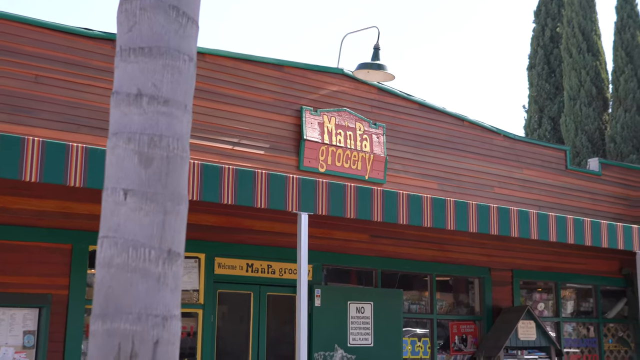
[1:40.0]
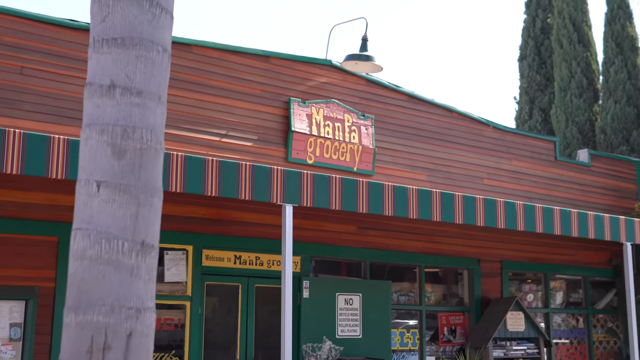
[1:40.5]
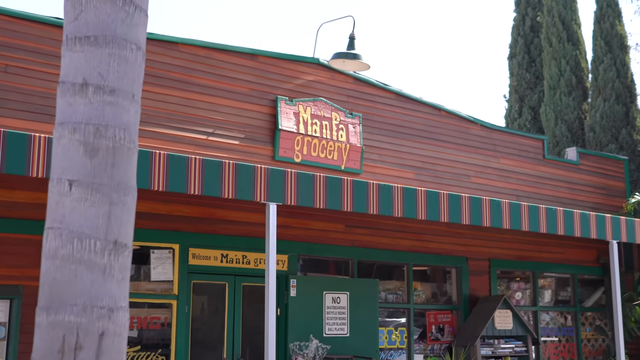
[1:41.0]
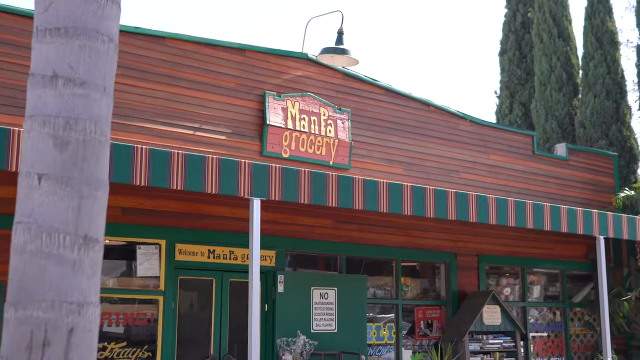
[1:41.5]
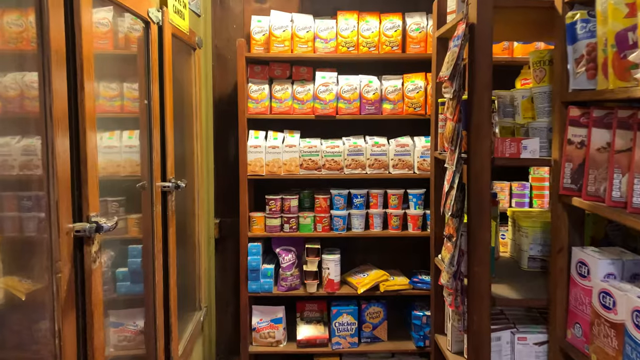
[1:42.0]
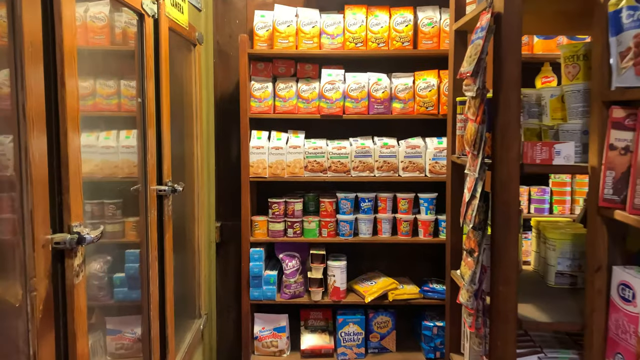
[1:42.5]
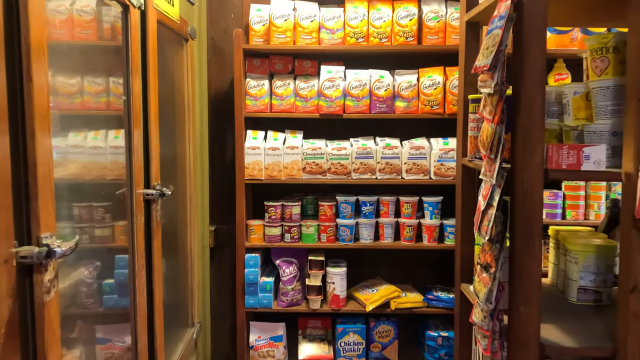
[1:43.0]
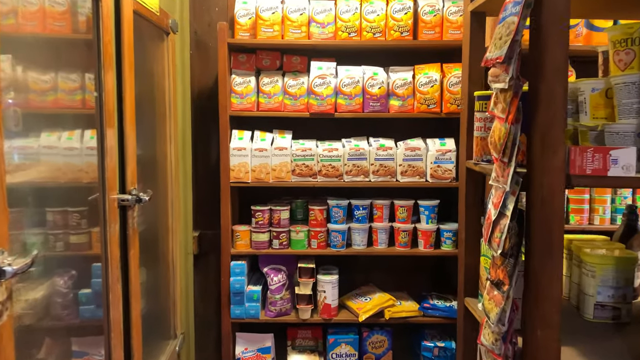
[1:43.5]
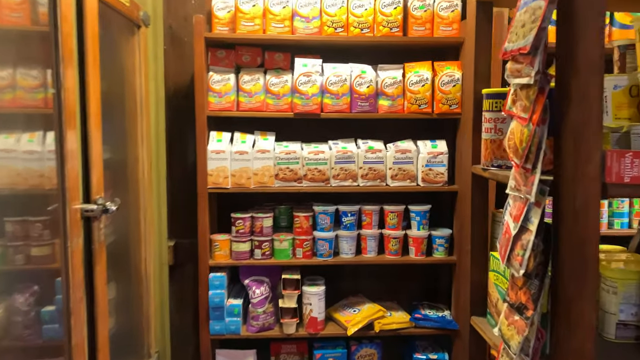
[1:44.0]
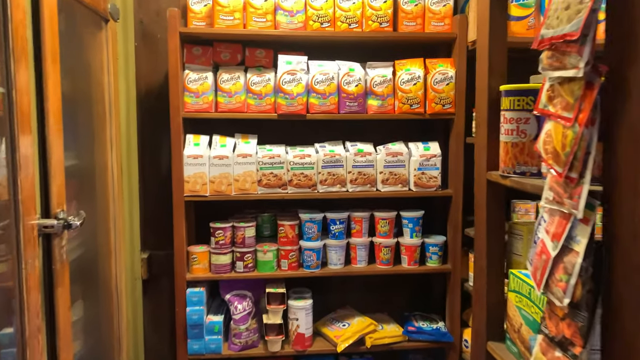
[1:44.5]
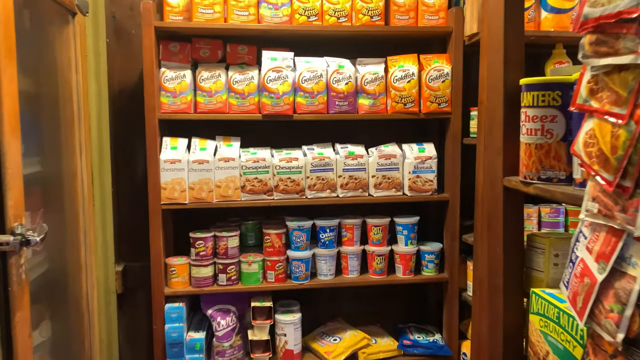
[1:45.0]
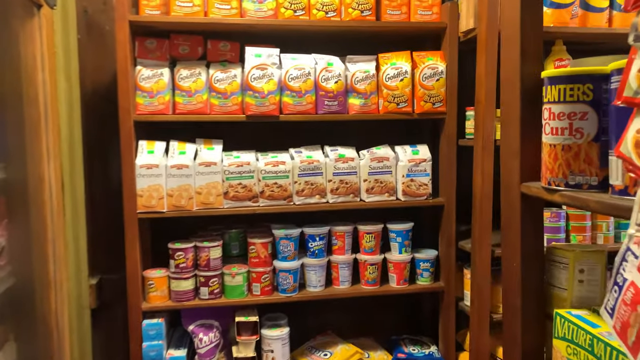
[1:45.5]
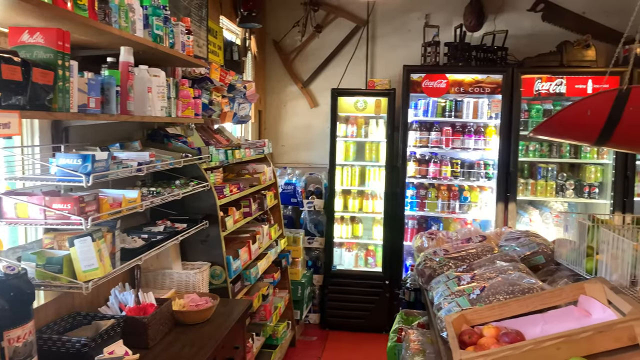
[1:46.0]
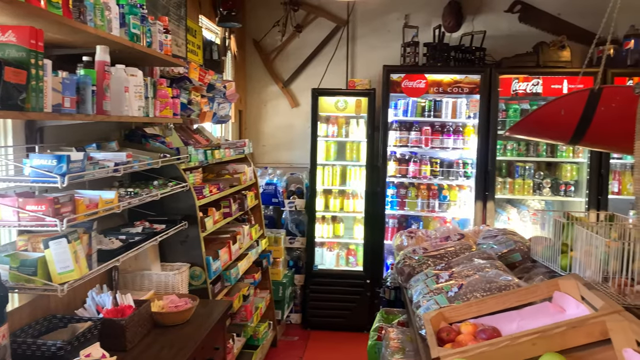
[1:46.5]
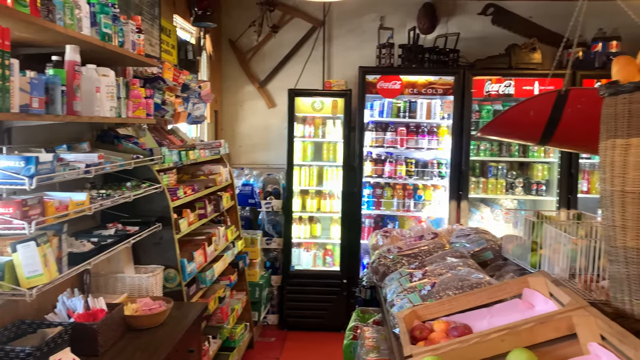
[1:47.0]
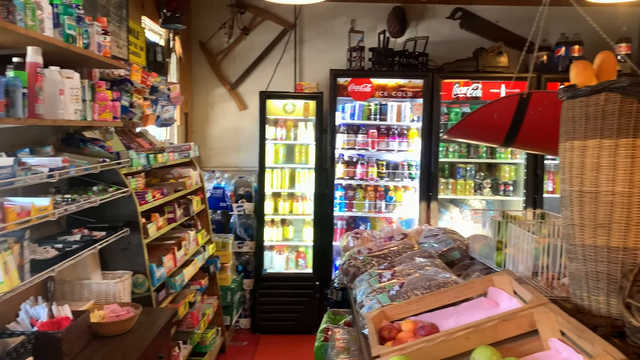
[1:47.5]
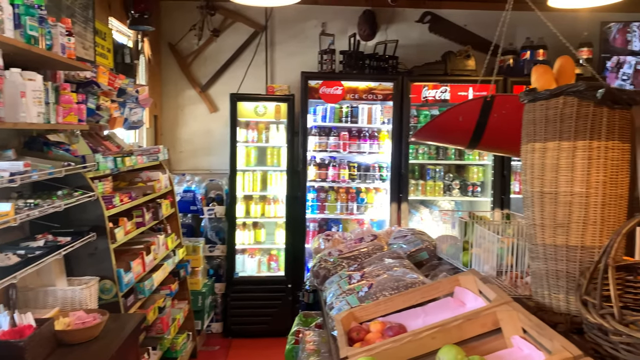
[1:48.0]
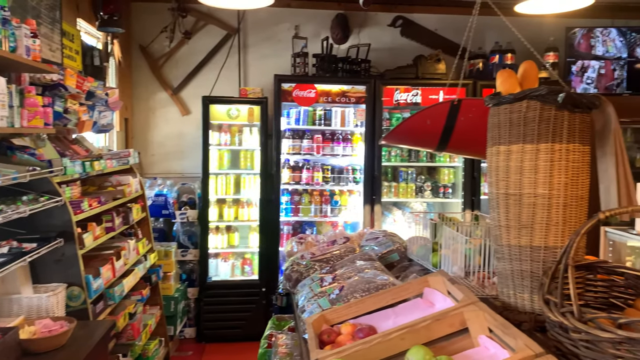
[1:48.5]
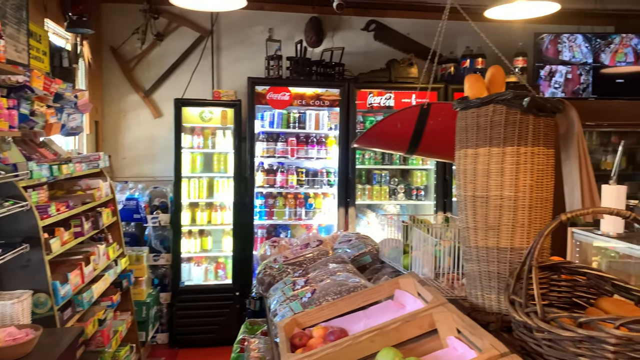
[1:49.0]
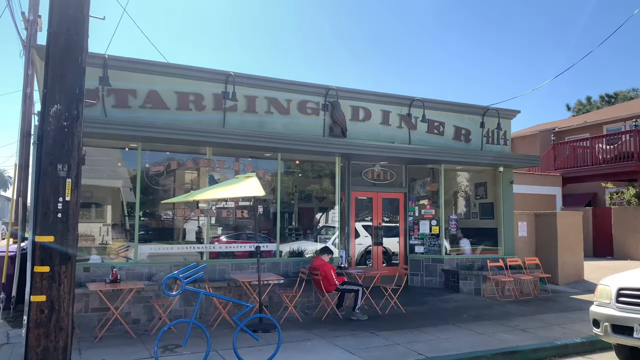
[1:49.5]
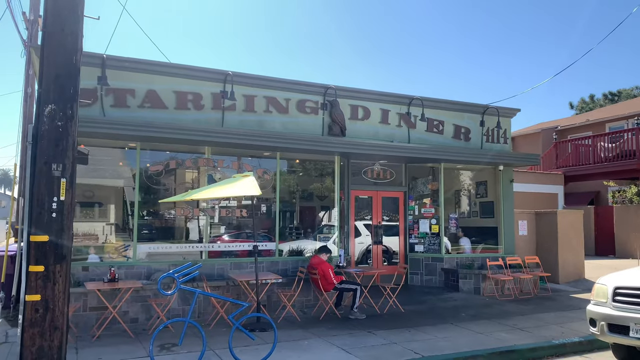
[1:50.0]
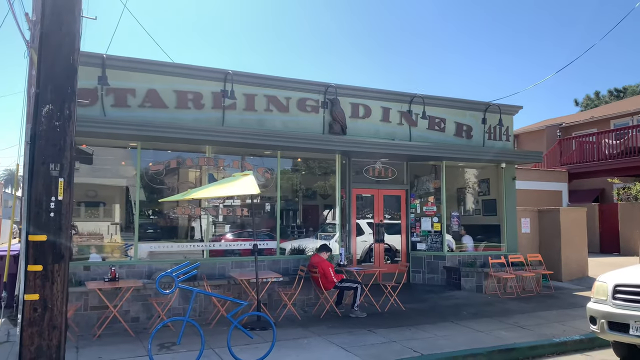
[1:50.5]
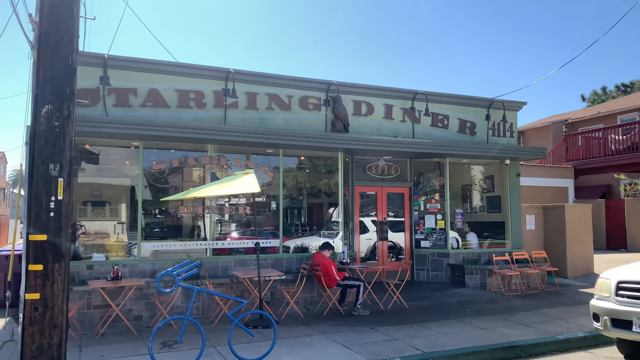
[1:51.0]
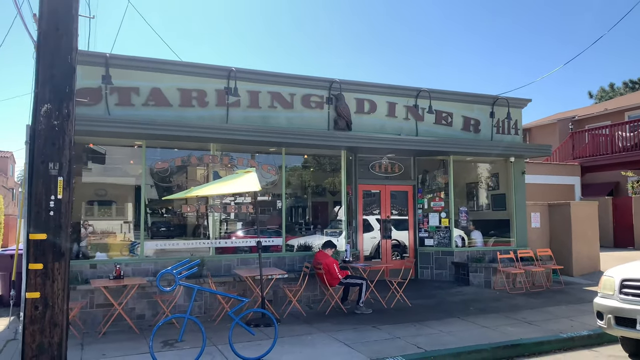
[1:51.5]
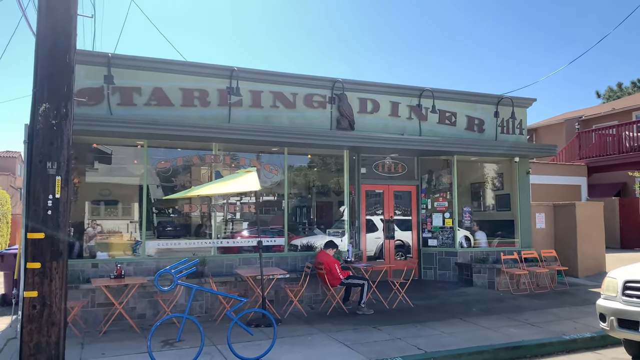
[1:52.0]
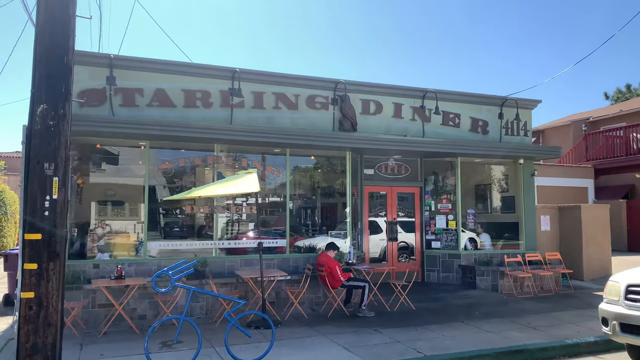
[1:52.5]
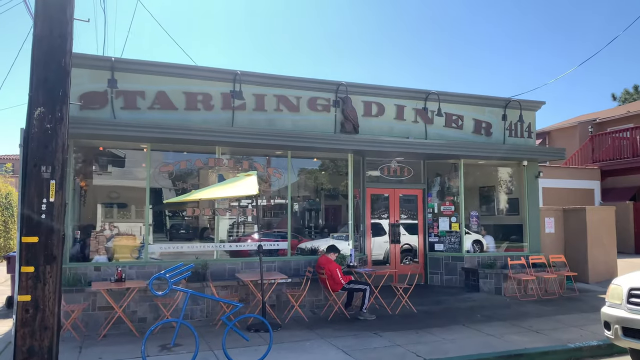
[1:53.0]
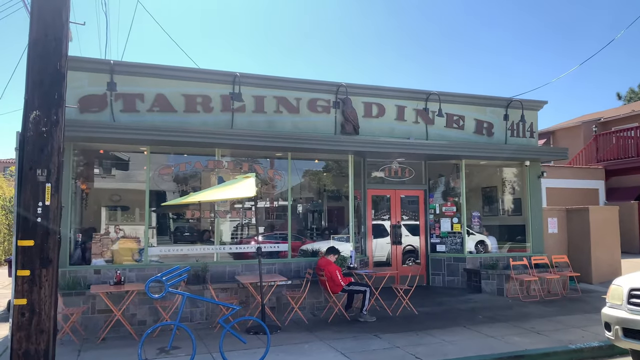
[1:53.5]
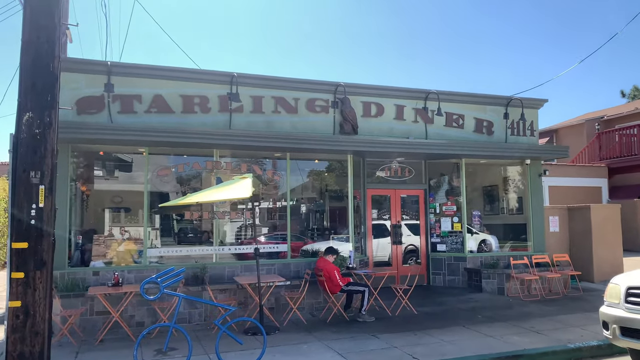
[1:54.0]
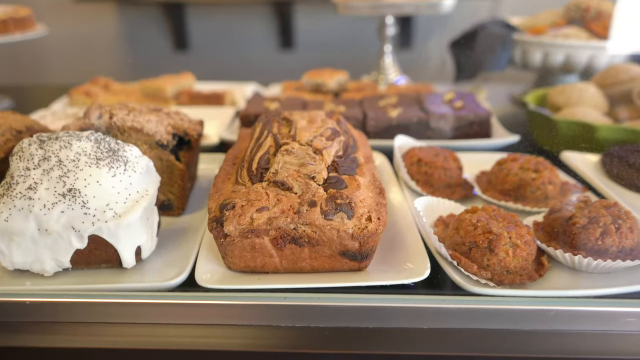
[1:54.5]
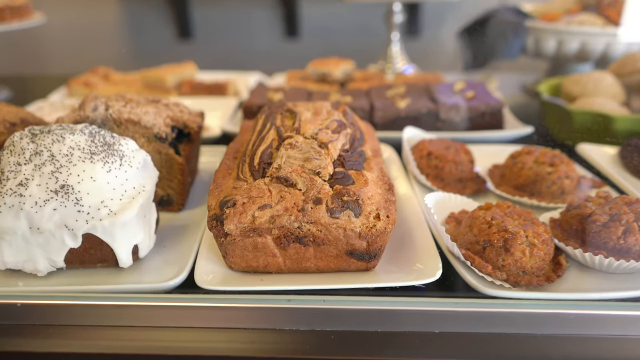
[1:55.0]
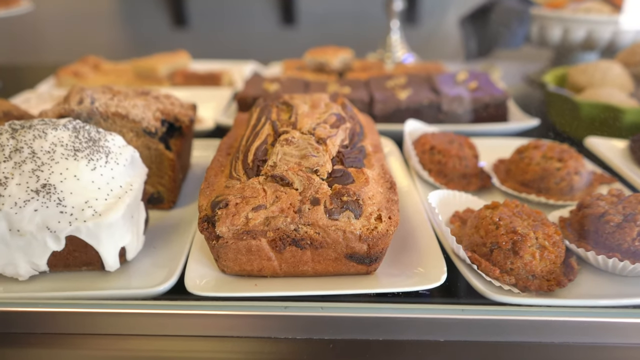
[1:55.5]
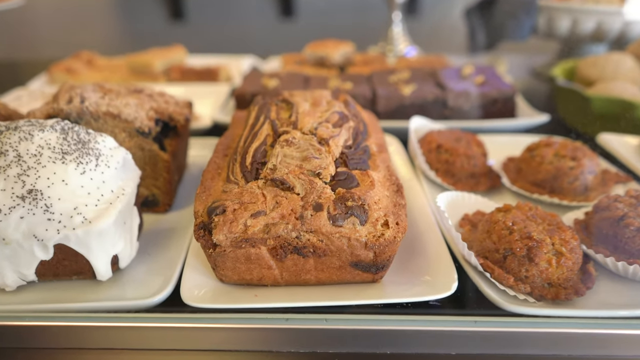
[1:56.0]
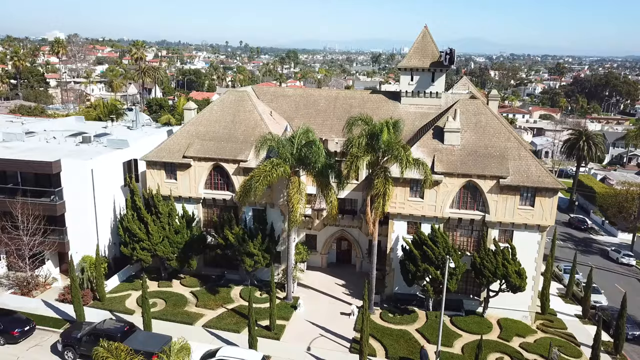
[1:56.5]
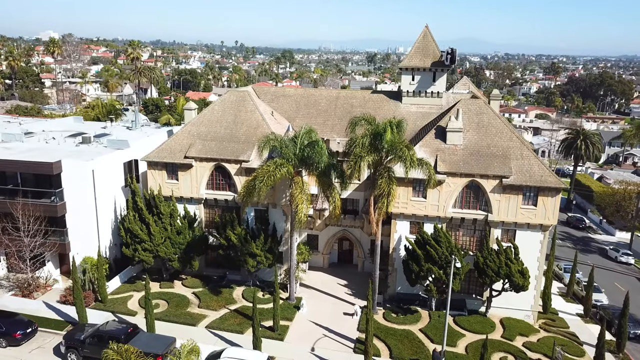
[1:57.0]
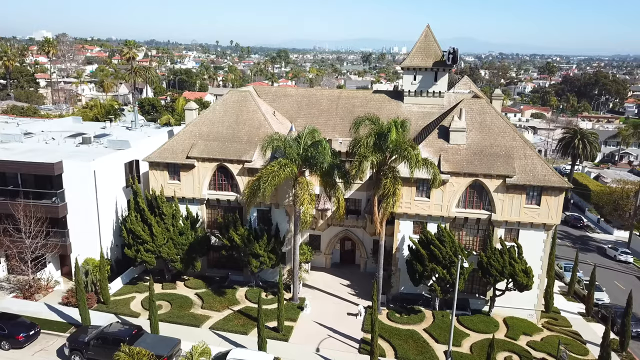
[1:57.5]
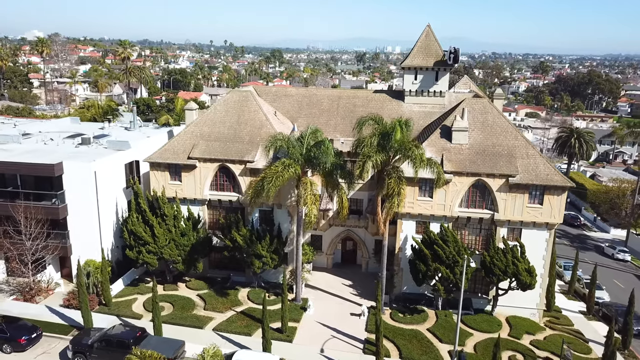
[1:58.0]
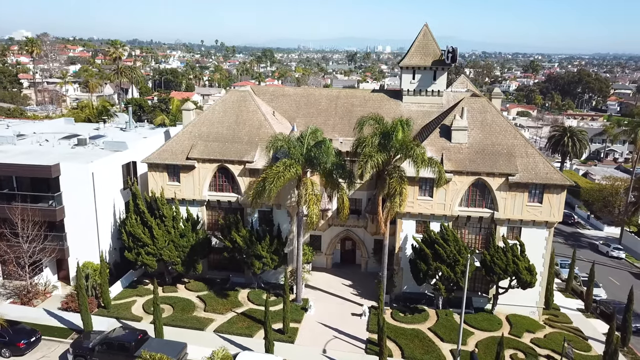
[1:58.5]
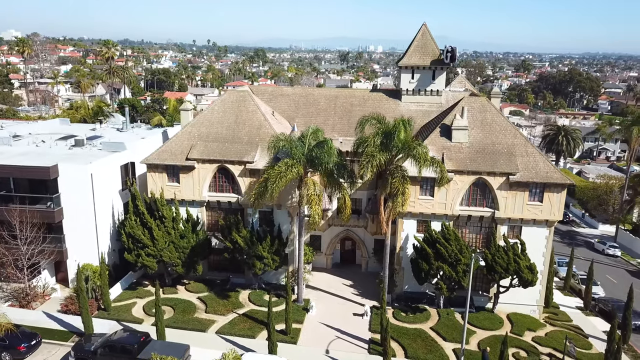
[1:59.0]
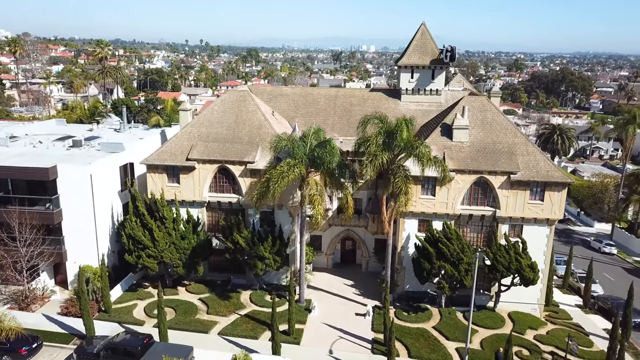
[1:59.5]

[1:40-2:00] The video goes inside the shop, which is packed with a lot of groceries. It then shifts to the outside of what looks like a confectionery shop, with people sitting outside and bakery items on plates inside. Next comes an aerial view of a suburb and a closer look at it, with cars parked outside, maroon roofs and cream houses with lots of decorations. The houses are mostly in light colors, bright cream and grey. The yards have trimmed lawns and trimmed bushy flowers. One house has its grass trimmed in circles as decoration. The trees are maintained and trimmed so as not to disturb the houses or their driveways.